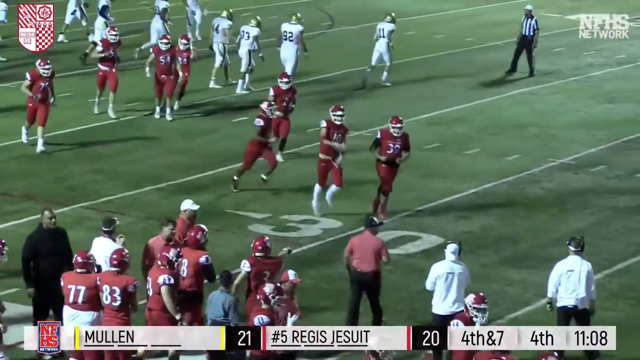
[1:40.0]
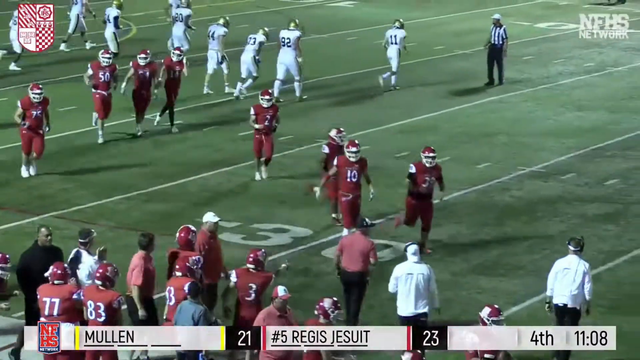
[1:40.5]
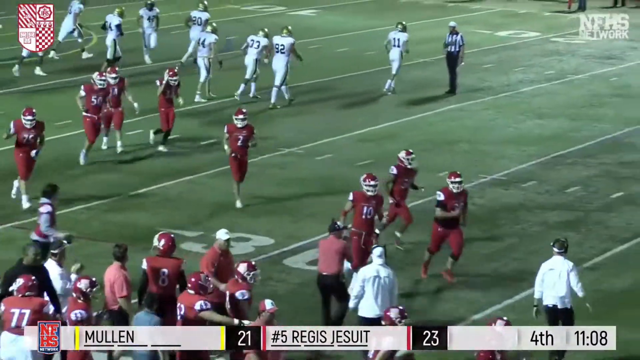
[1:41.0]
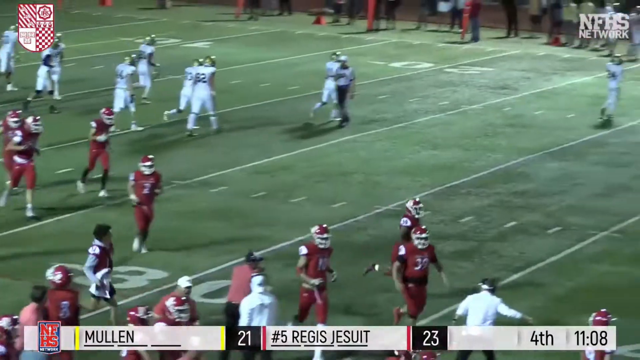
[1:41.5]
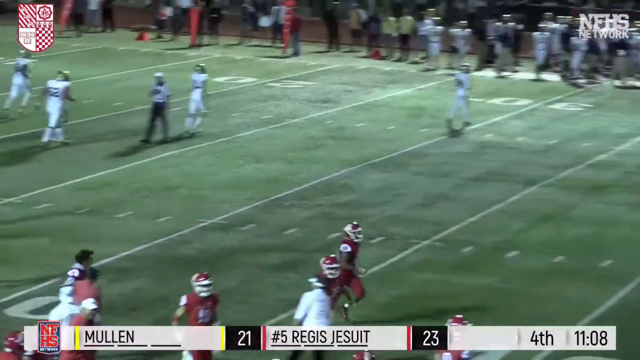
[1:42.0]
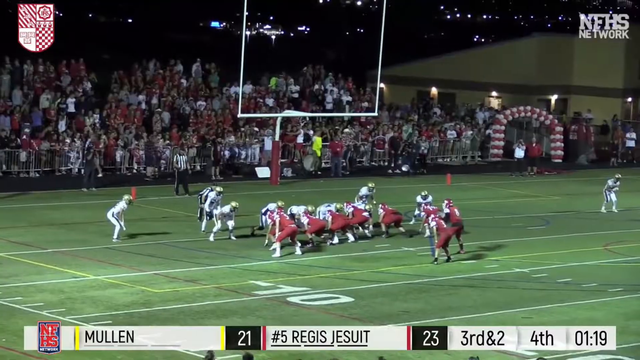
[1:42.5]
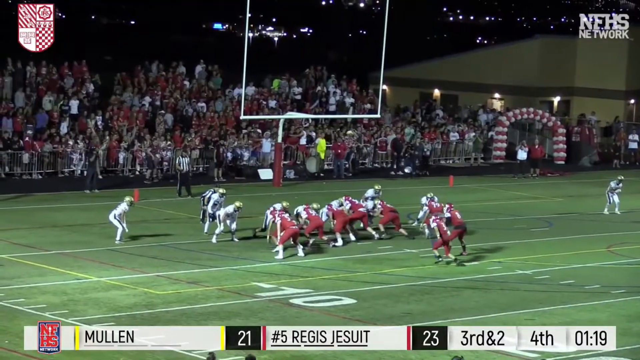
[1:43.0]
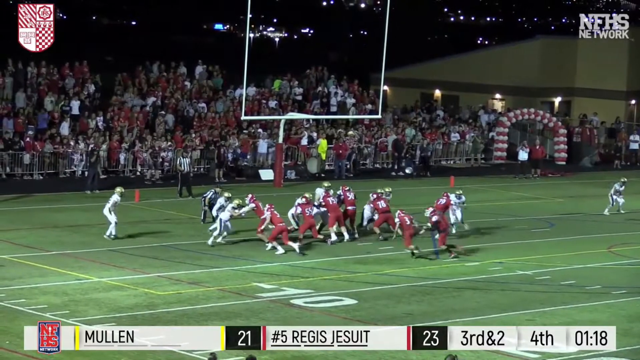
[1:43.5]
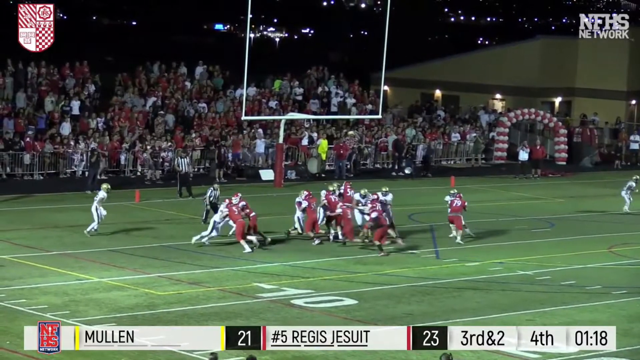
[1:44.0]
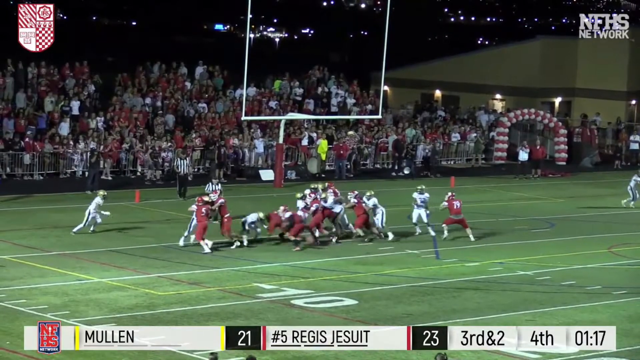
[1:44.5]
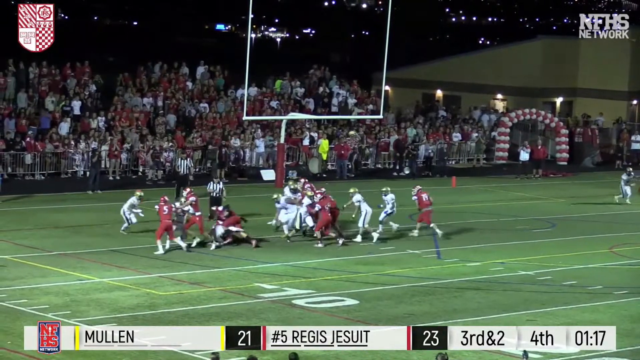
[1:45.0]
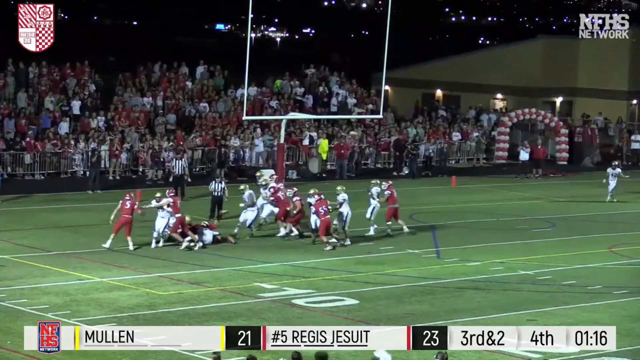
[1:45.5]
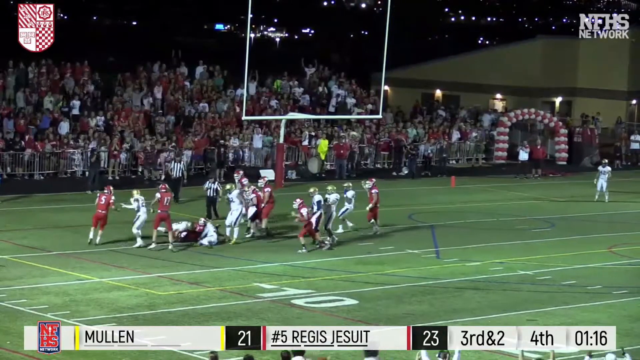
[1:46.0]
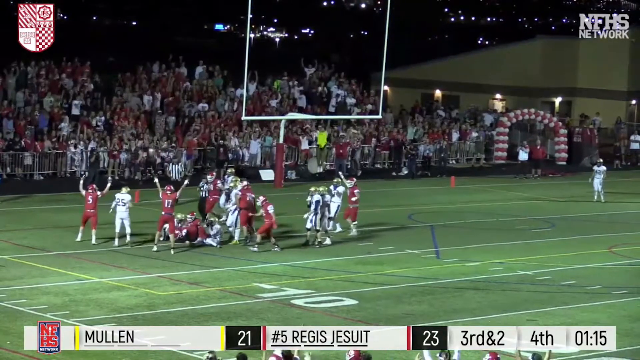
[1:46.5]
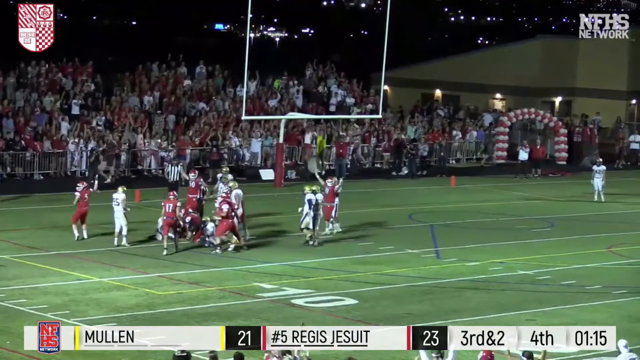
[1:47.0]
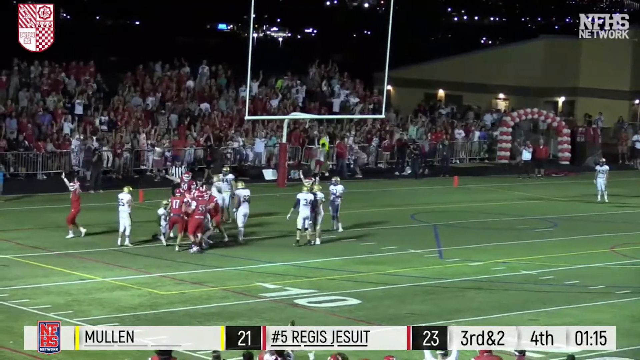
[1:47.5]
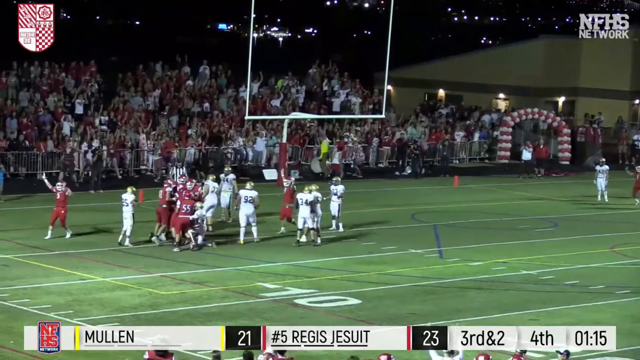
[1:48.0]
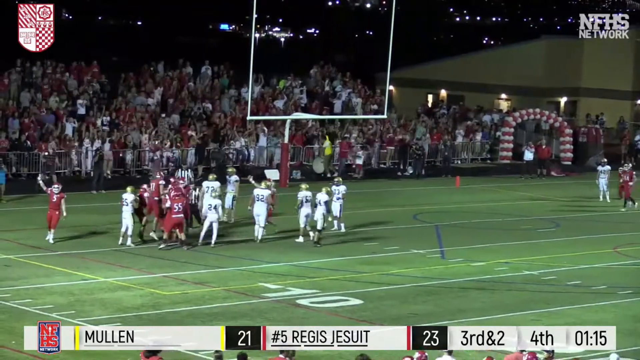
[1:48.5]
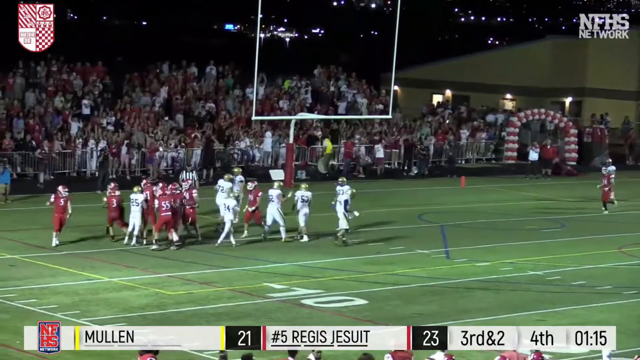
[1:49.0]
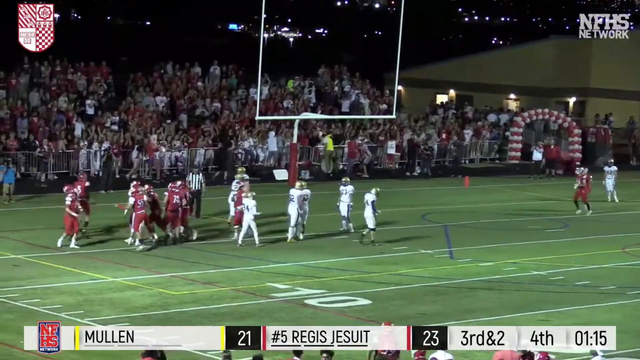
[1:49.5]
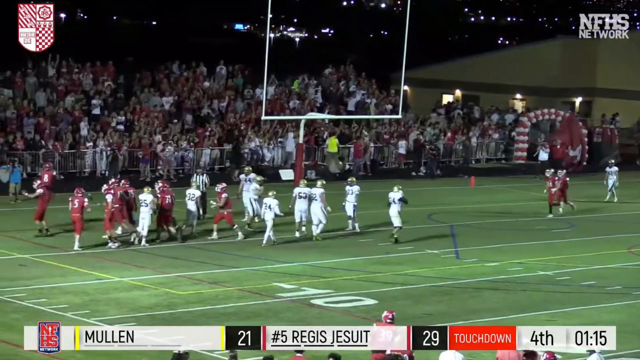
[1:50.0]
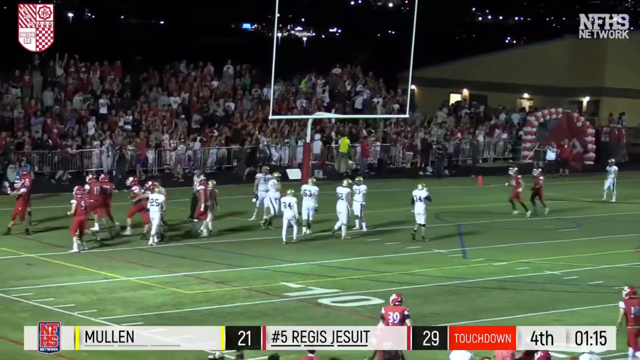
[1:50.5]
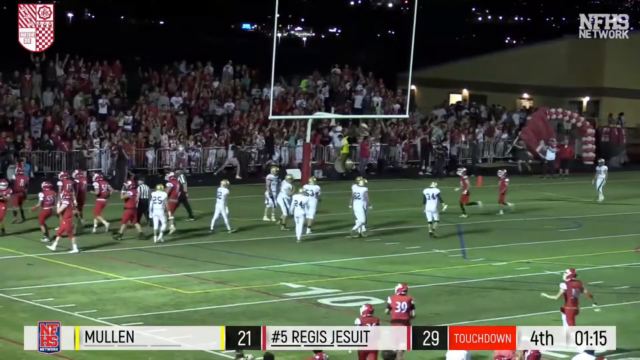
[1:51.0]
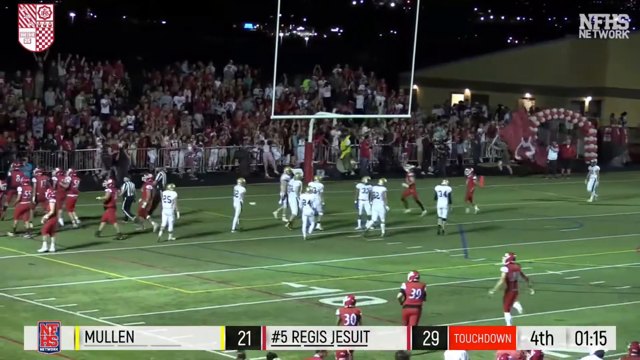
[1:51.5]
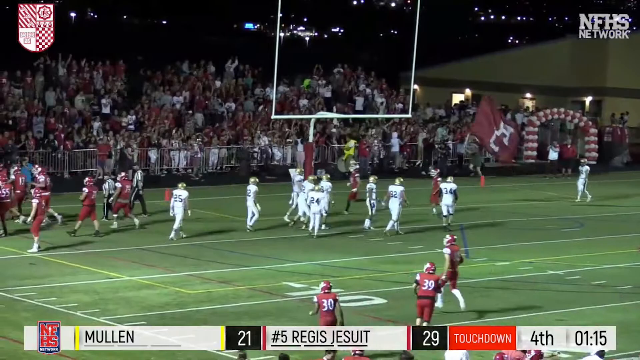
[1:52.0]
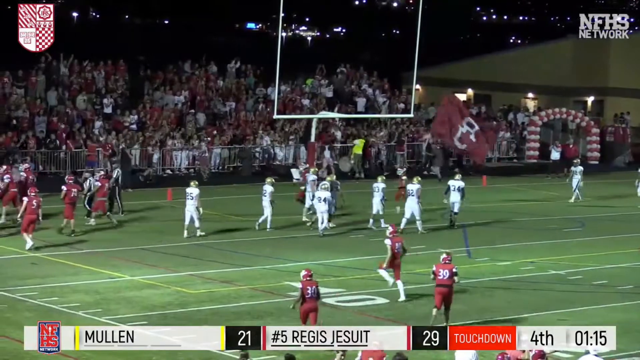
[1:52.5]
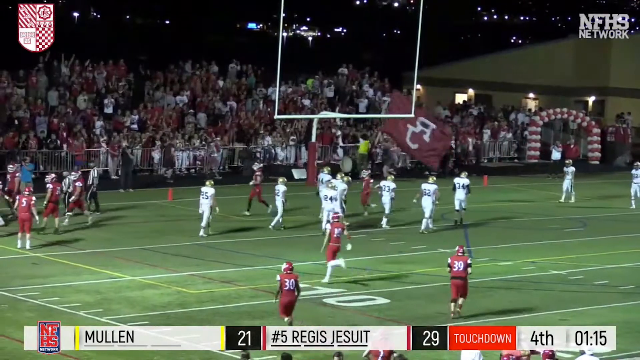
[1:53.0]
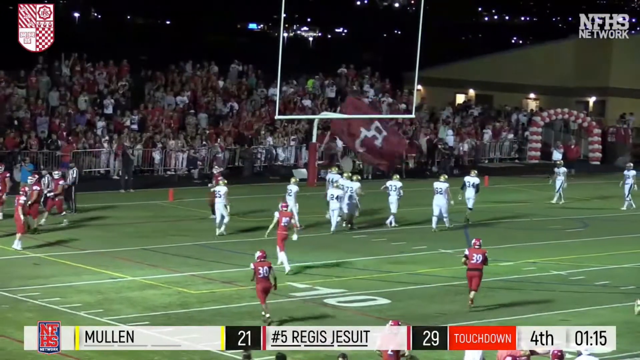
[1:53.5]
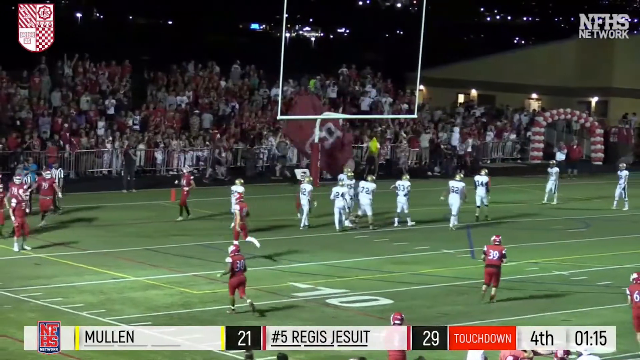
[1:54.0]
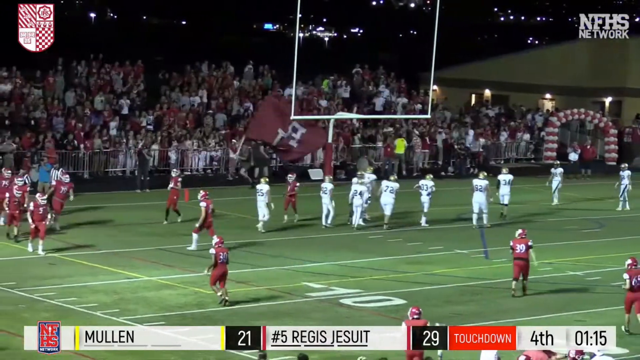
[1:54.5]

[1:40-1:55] Both teams run off the field to their sidelines, with the score 23 to 21 in favor of the home team. A new play shows the red team near the goal line, about to score, on third and two with a minute and 15 seconds to go in the game. The quarterback takes the ball, trucks over a defender, and runs right at the goal line, just enough for a touchdown. The home team in red jerseys wins 29 to 21, the score shown at the end of the video. "NFHS Network" appears in white text in the top right corner, and a white and red flag-like logo is in the top left corner.